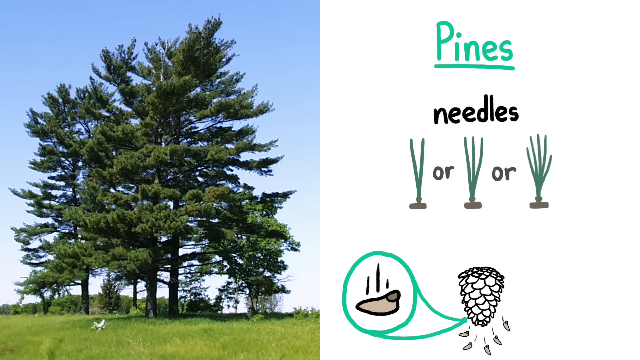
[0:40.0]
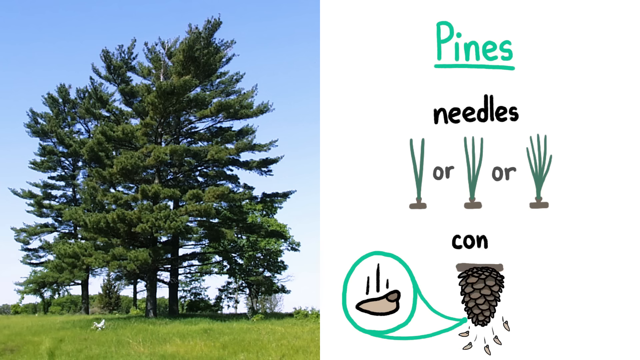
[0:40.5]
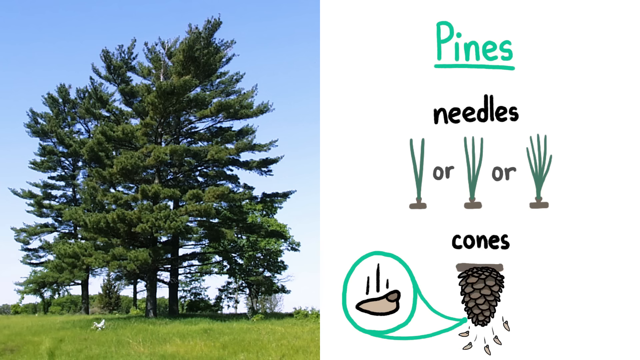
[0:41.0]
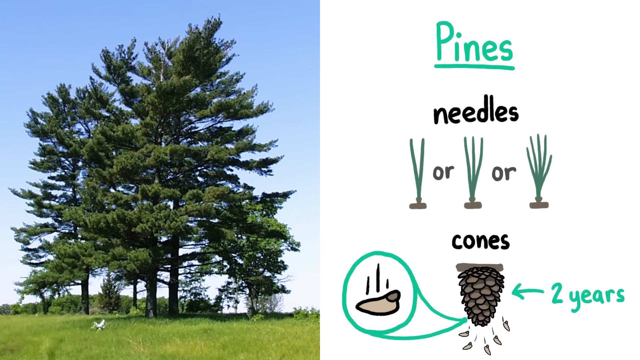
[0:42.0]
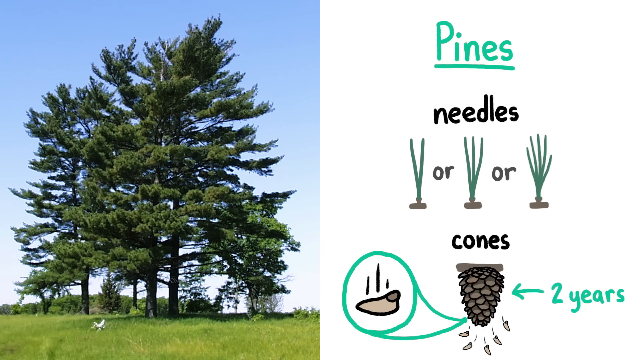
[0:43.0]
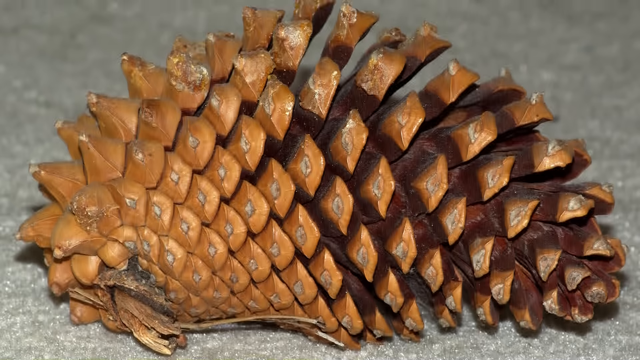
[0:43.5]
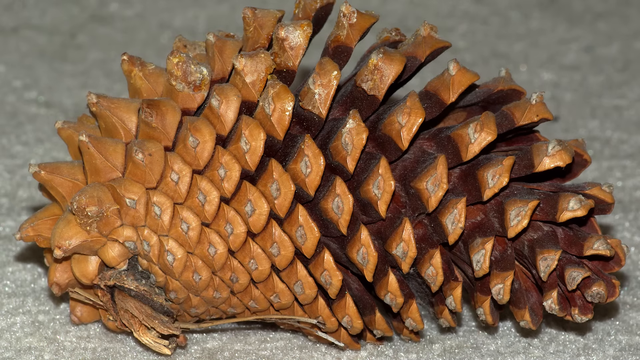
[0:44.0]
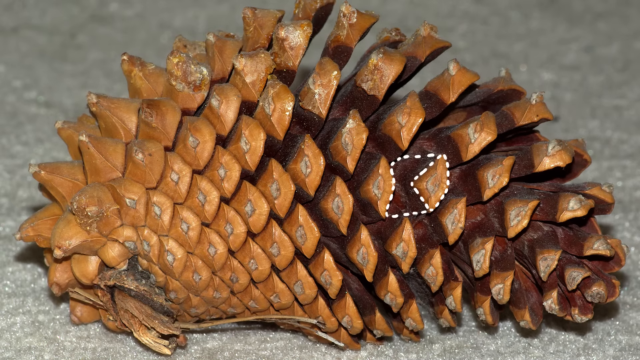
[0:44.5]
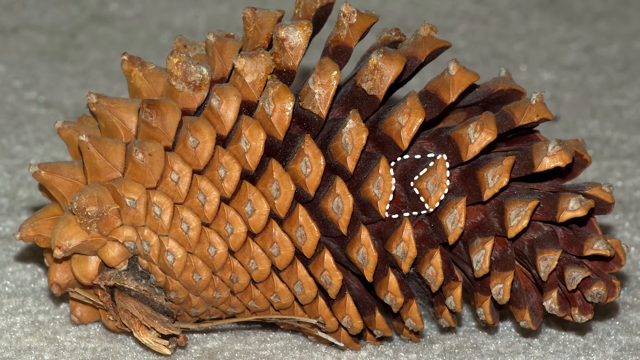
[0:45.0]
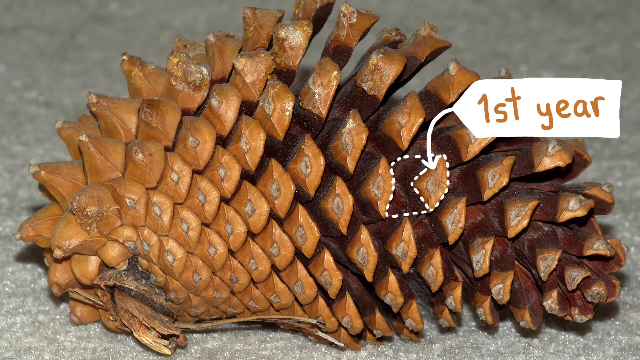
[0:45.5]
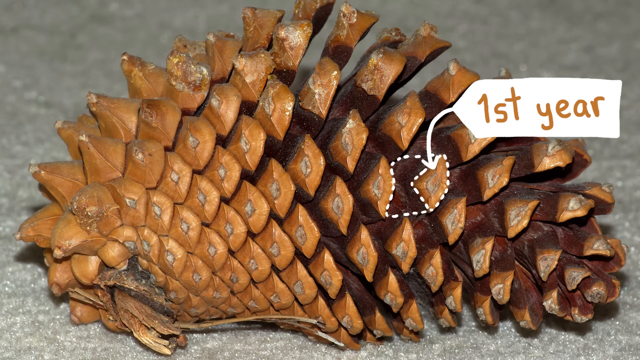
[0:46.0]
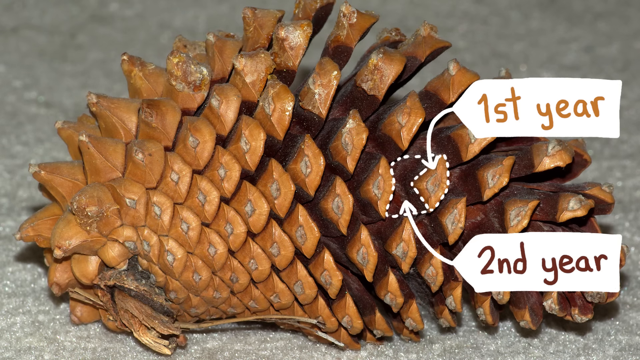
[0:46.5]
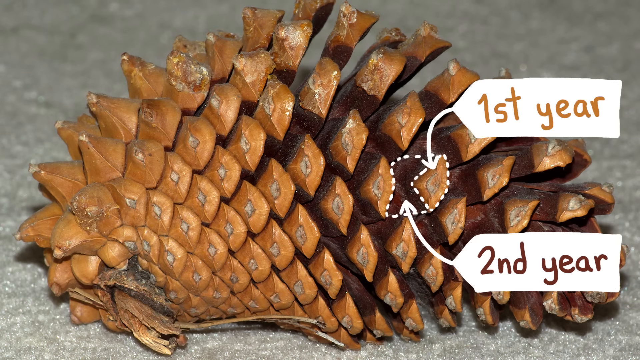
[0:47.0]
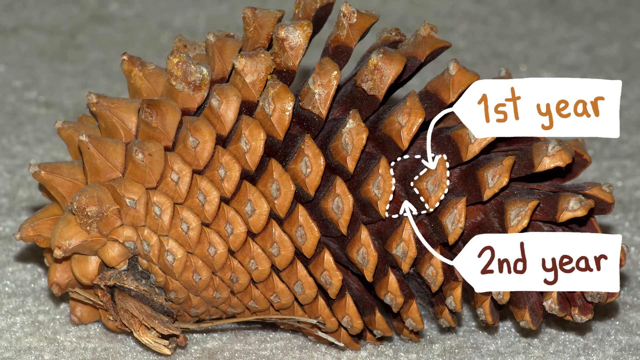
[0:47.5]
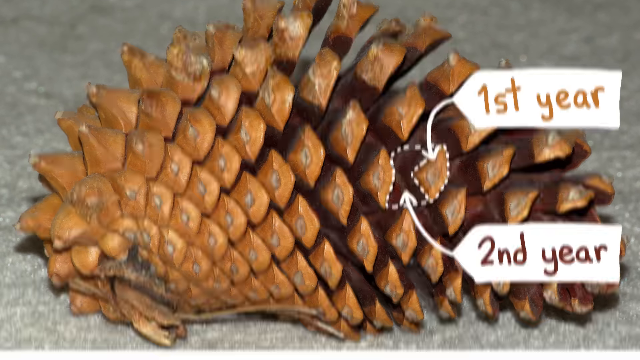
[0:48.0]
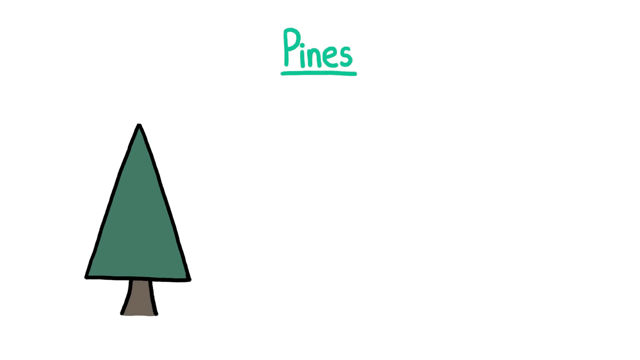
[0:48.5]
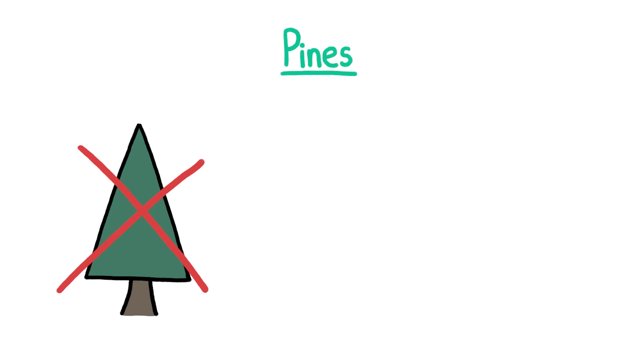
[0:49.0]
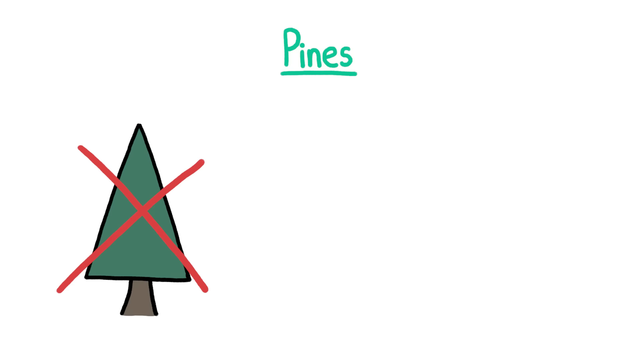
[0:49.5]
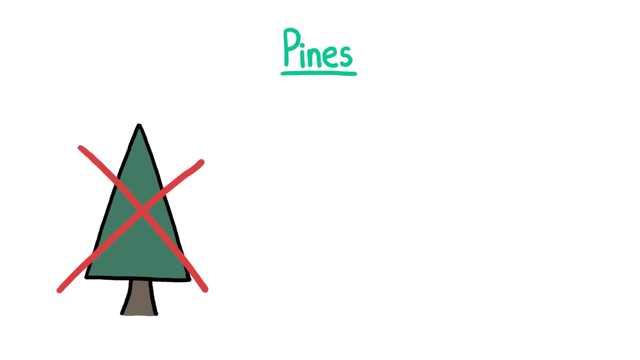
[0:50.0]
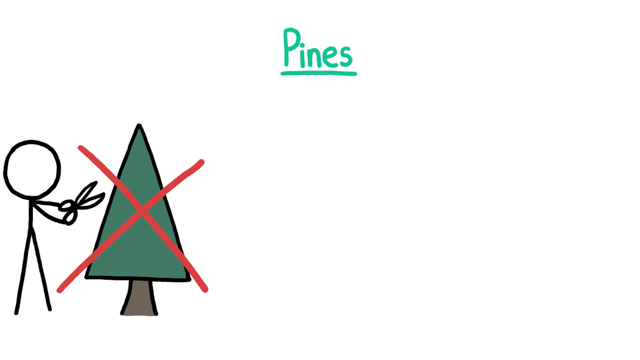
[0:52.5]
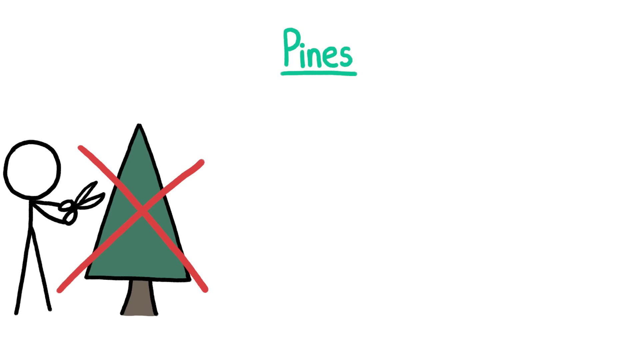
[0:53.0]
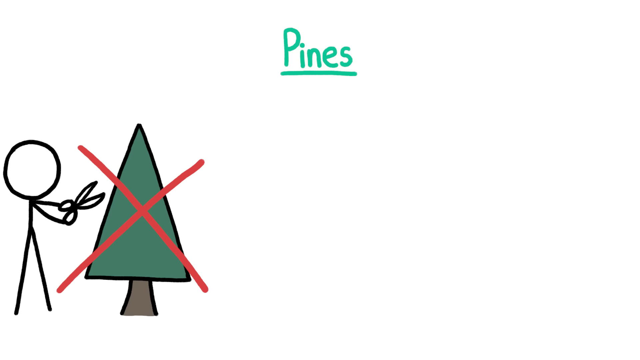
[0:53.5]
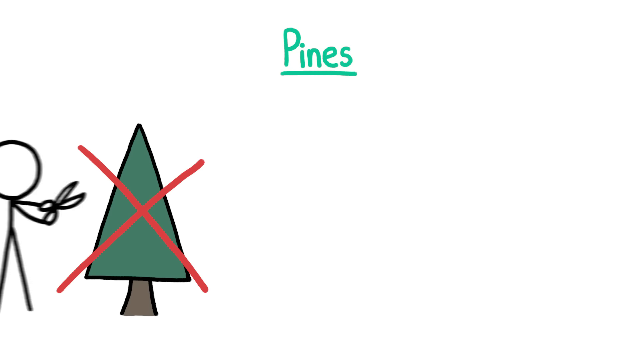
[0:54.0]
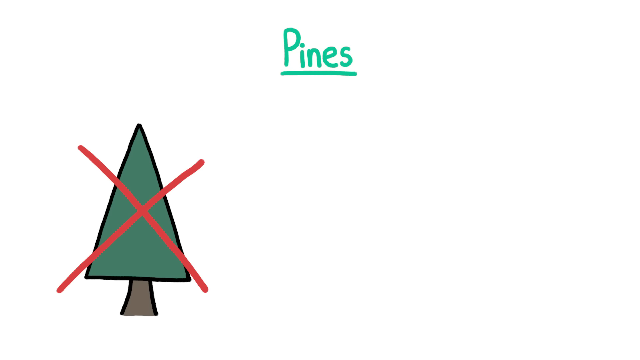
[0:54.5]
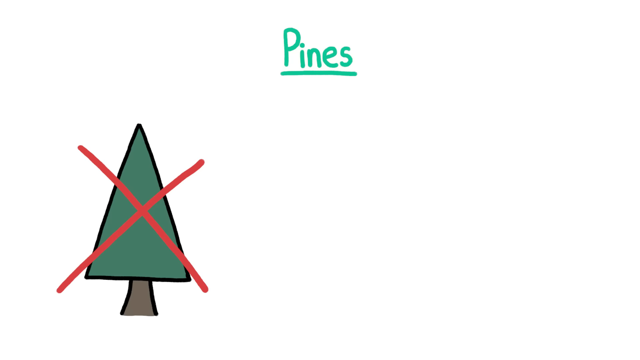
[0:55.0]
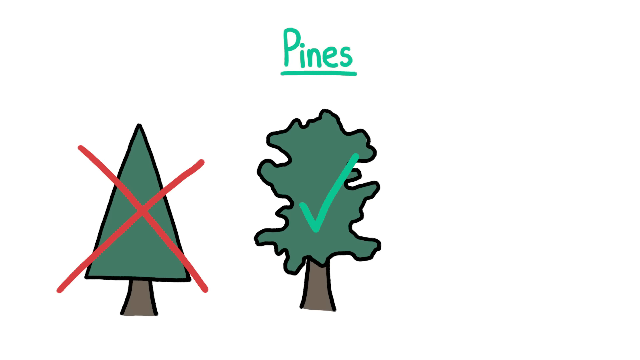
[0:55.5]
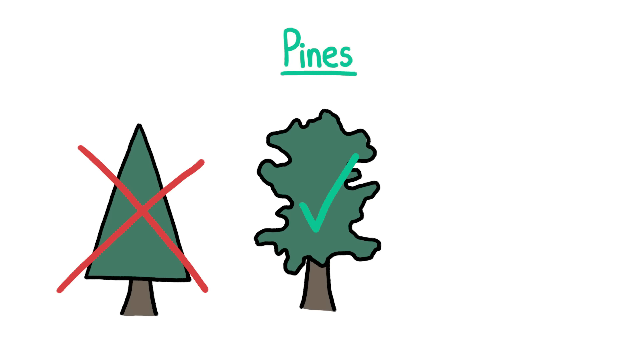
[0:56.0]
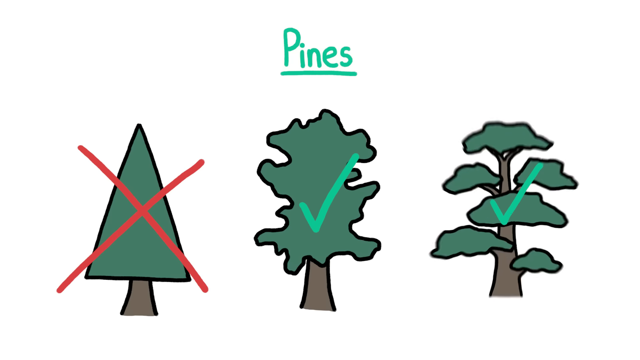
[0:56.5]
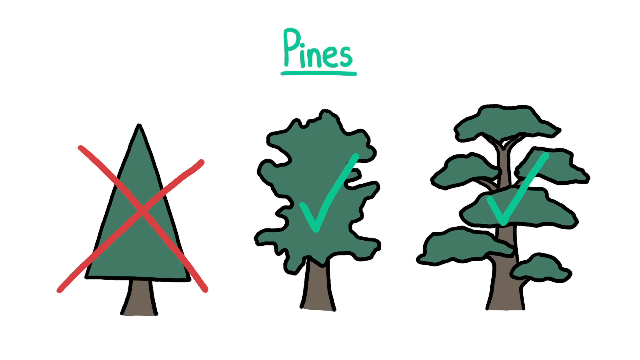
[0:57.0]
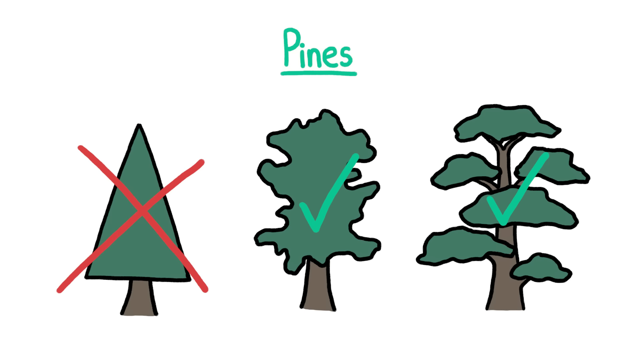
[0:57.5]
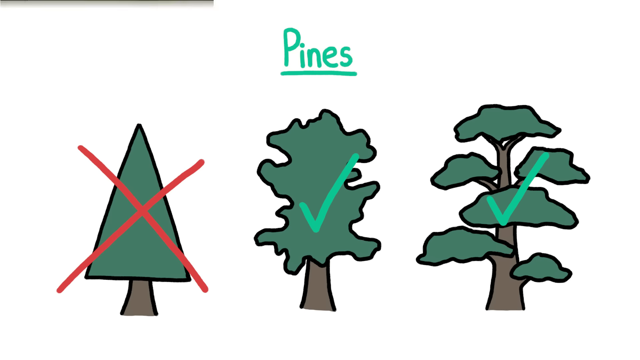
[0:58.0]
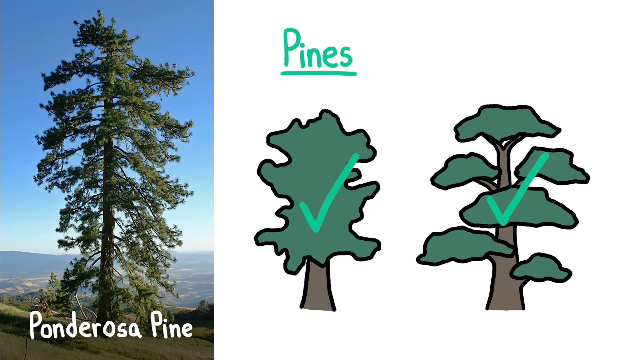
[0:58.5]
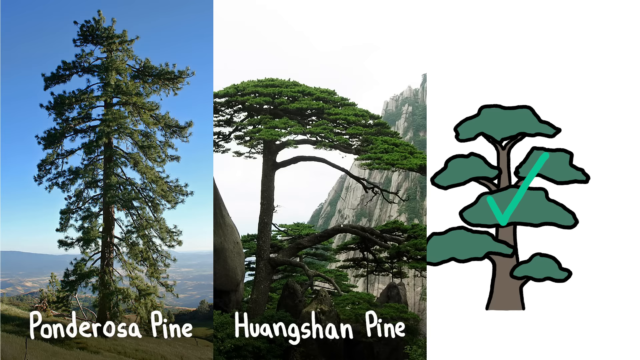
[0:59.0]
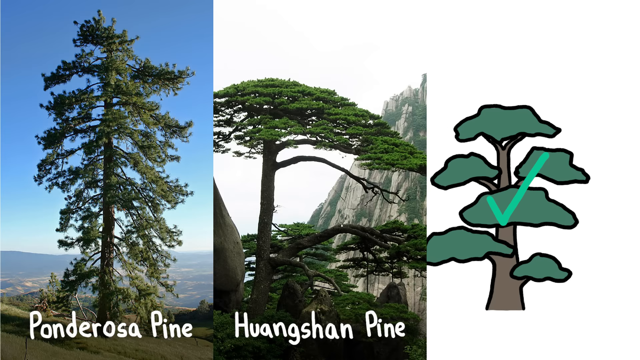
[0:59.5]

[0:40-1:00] A large image of pine trees at the edge of an open field fills the left side, and the right side is a solid white background. At the top it says "pines", and under that "needles", with an illustration of two, three, or five needles coming out of a group. Below that is a pine cone hanging upside down, along with the shape of the seeds and where they drop from on the cone.